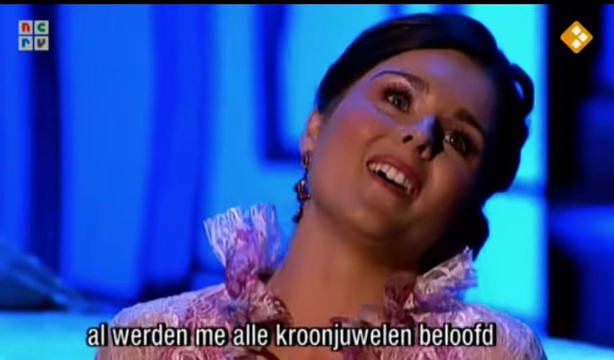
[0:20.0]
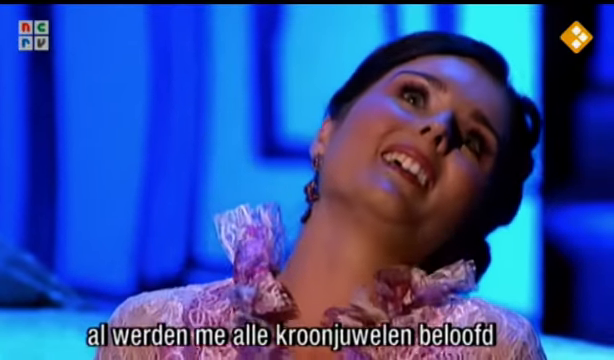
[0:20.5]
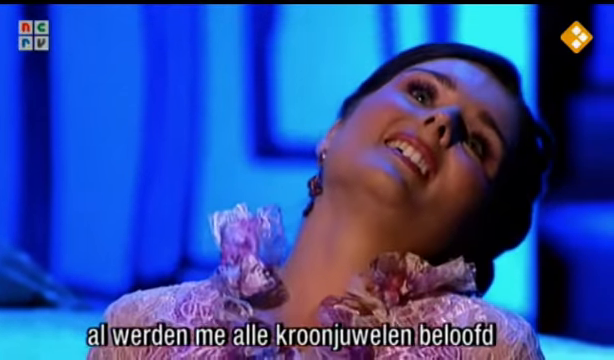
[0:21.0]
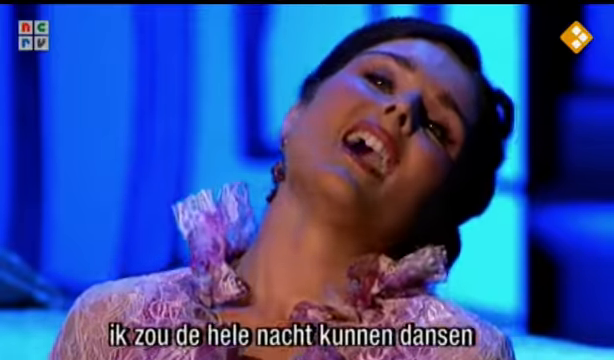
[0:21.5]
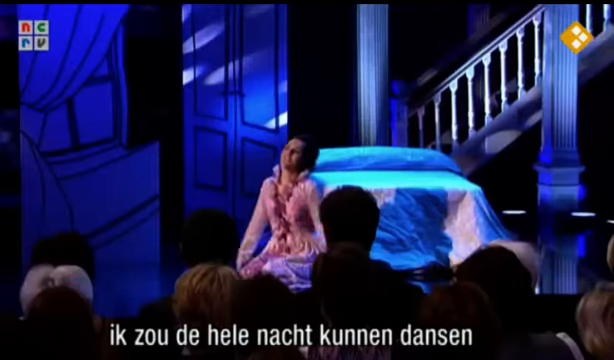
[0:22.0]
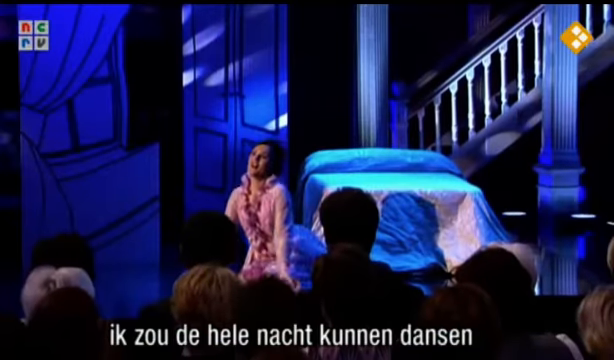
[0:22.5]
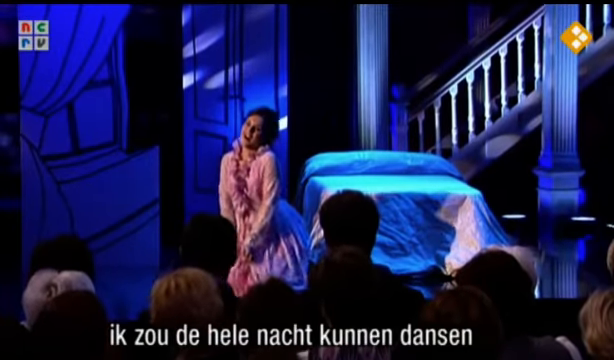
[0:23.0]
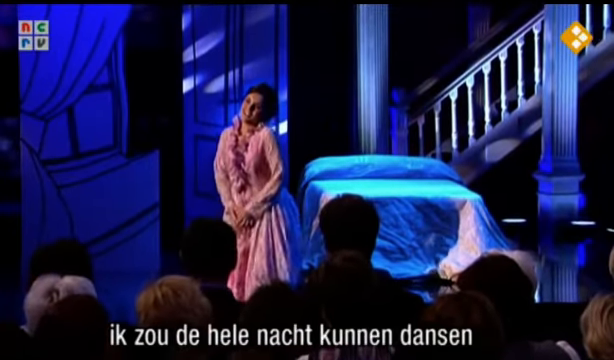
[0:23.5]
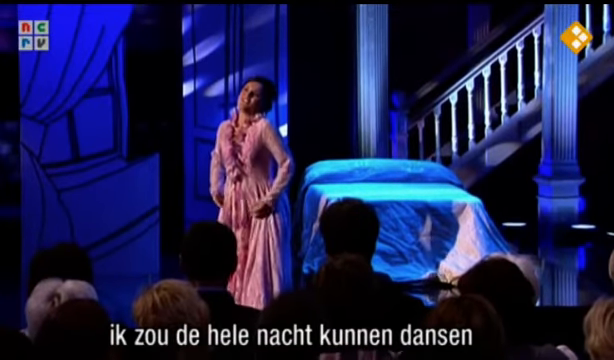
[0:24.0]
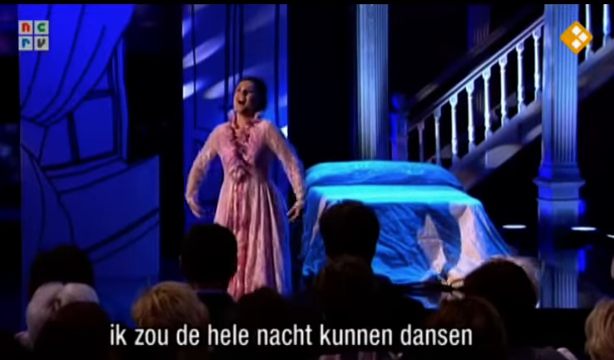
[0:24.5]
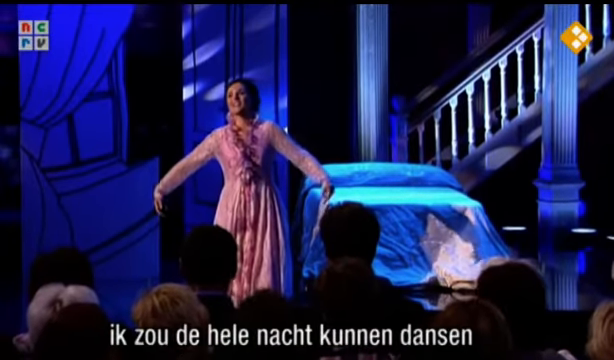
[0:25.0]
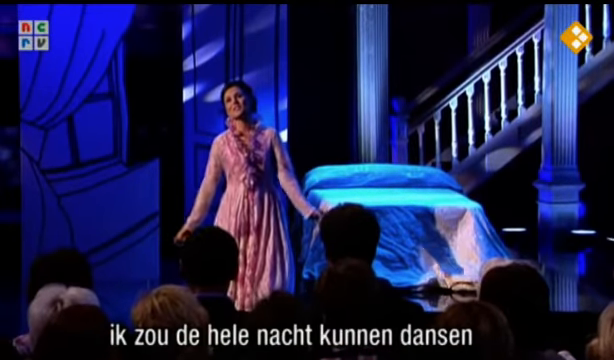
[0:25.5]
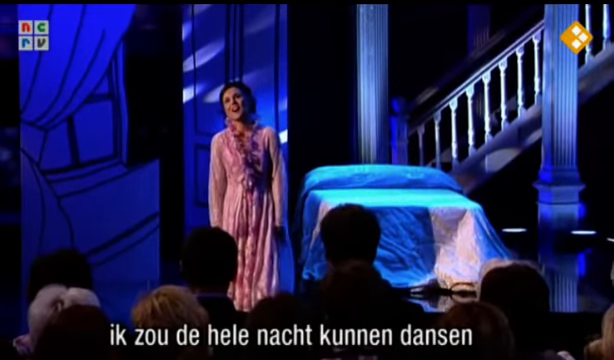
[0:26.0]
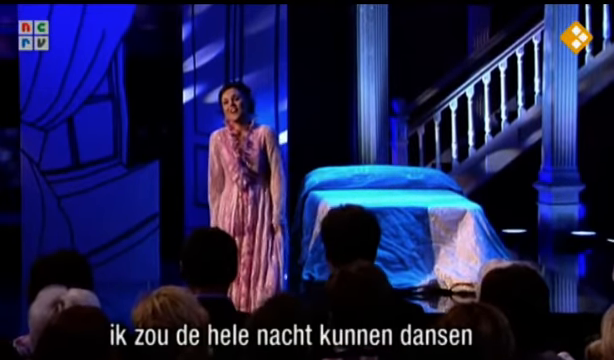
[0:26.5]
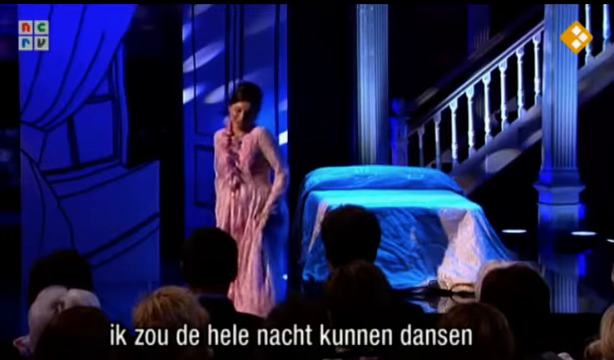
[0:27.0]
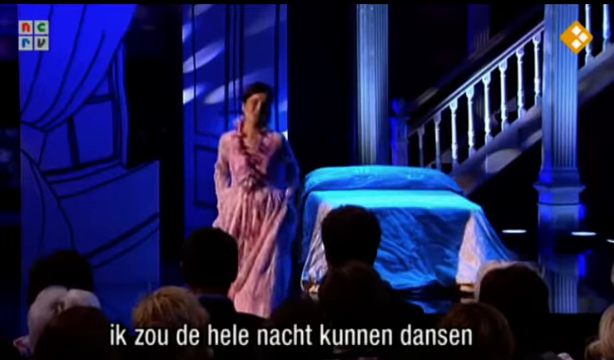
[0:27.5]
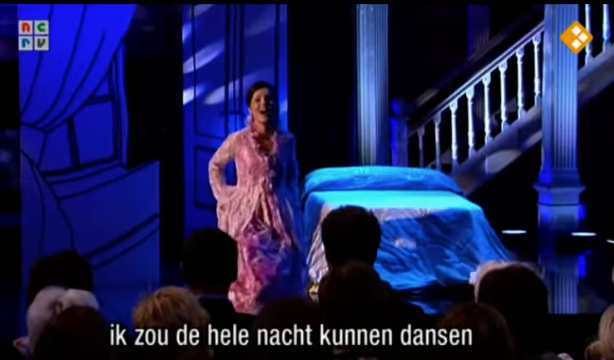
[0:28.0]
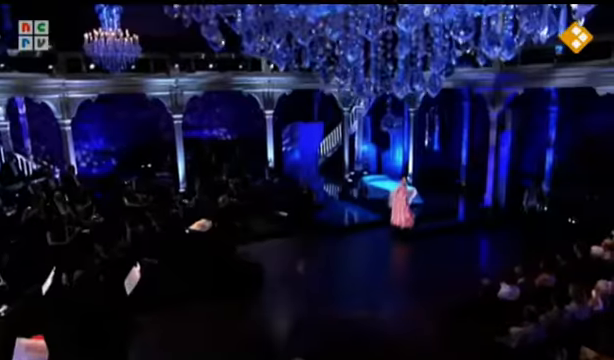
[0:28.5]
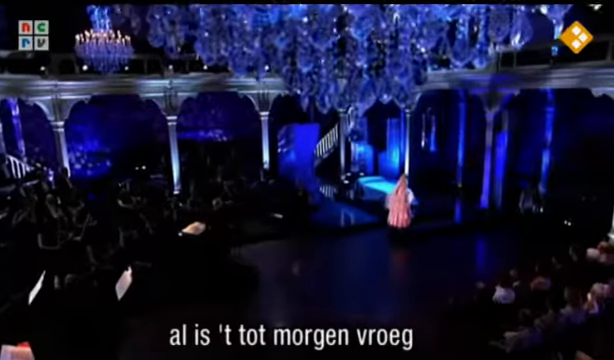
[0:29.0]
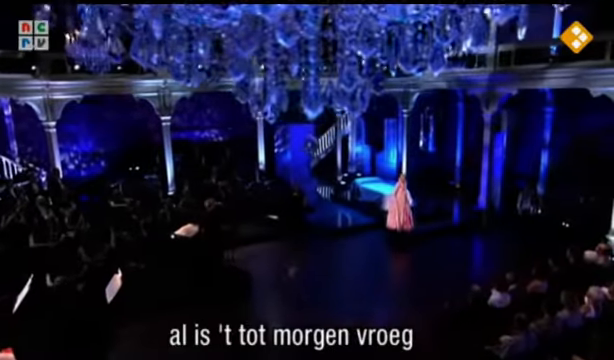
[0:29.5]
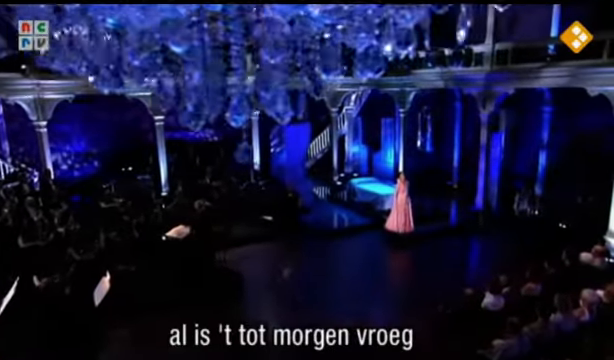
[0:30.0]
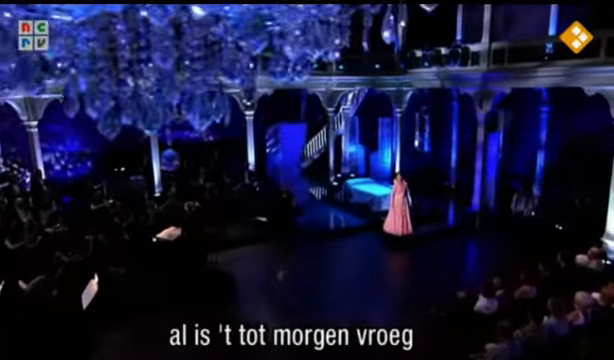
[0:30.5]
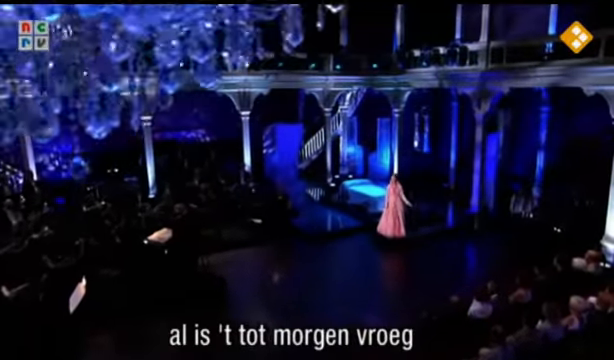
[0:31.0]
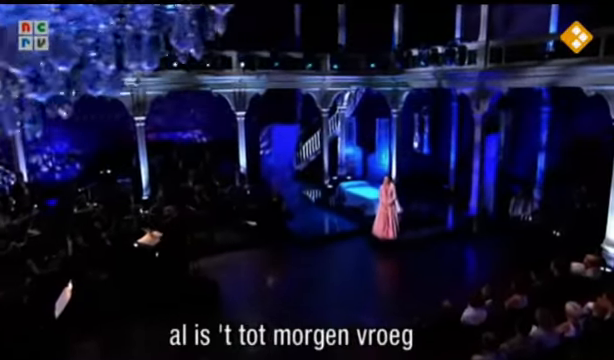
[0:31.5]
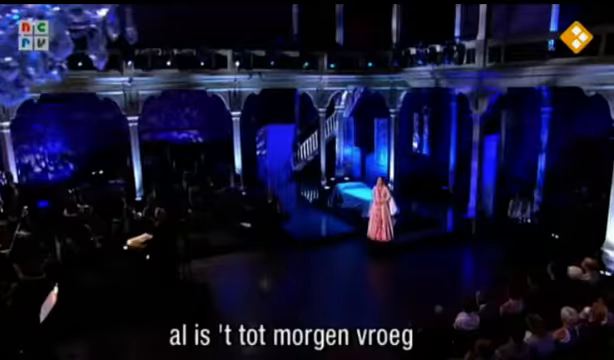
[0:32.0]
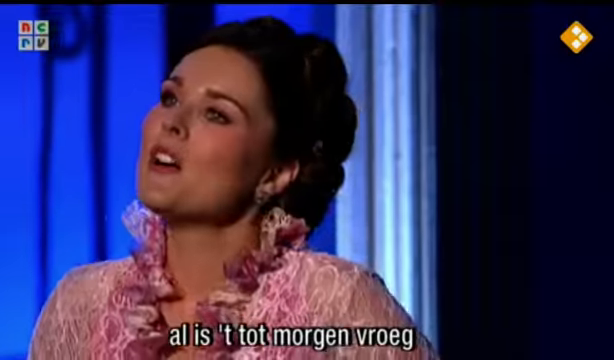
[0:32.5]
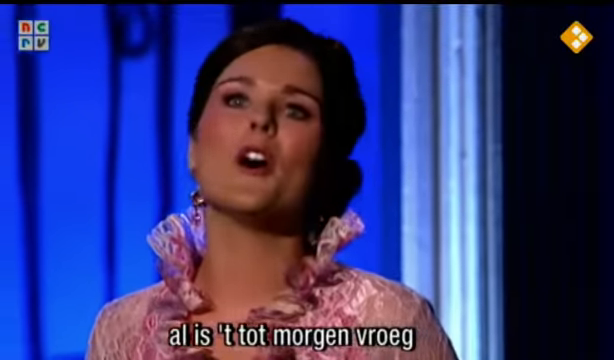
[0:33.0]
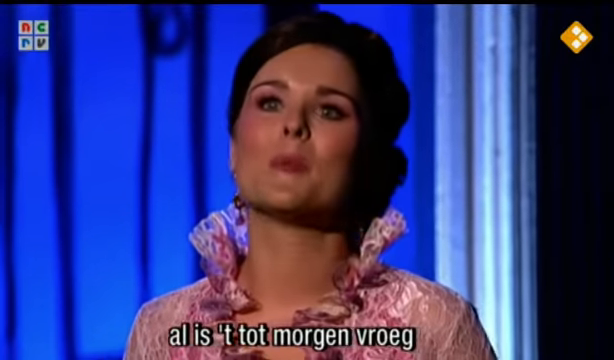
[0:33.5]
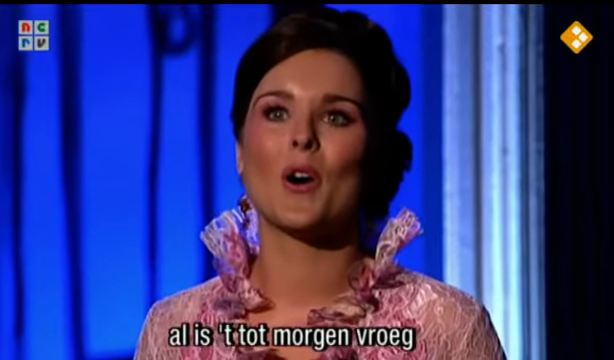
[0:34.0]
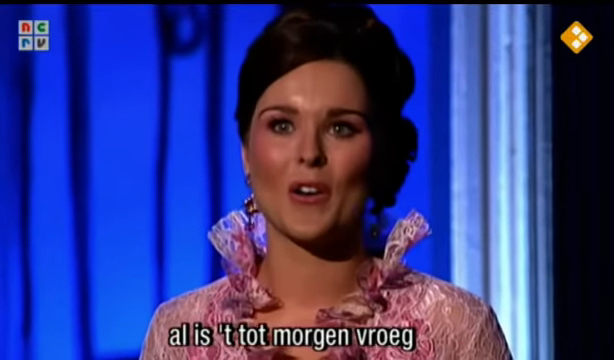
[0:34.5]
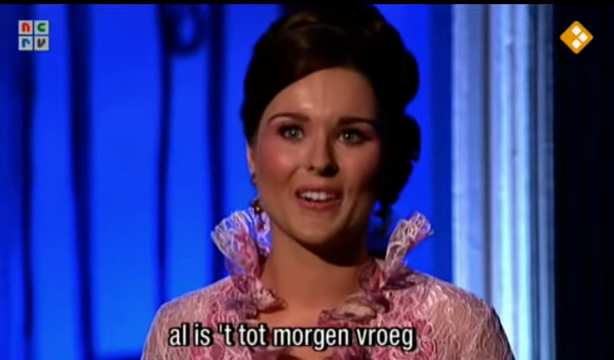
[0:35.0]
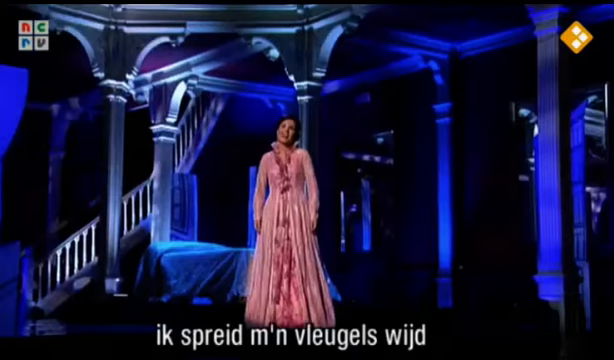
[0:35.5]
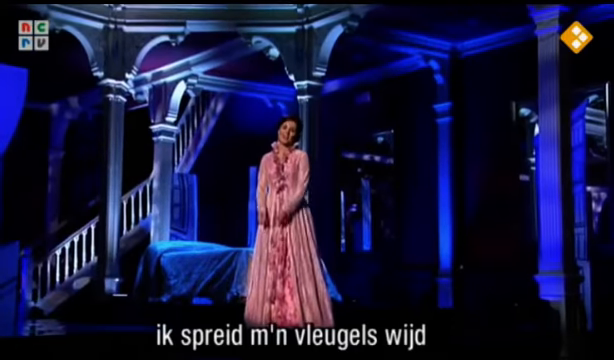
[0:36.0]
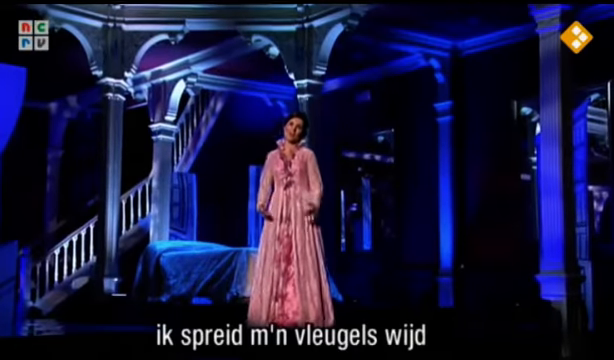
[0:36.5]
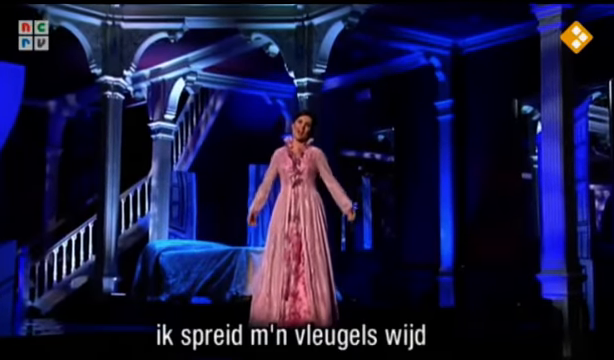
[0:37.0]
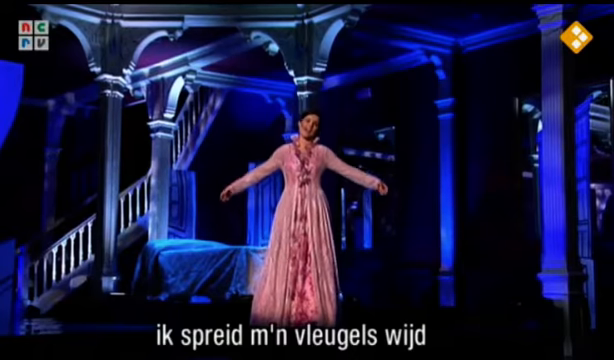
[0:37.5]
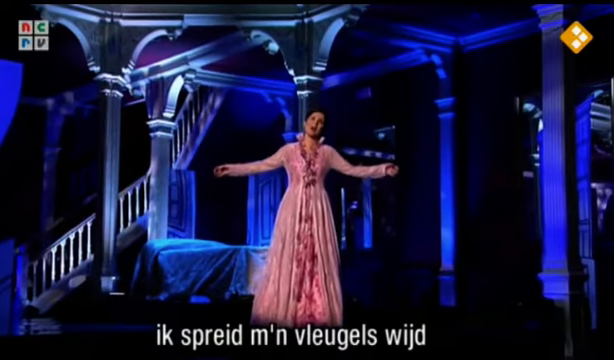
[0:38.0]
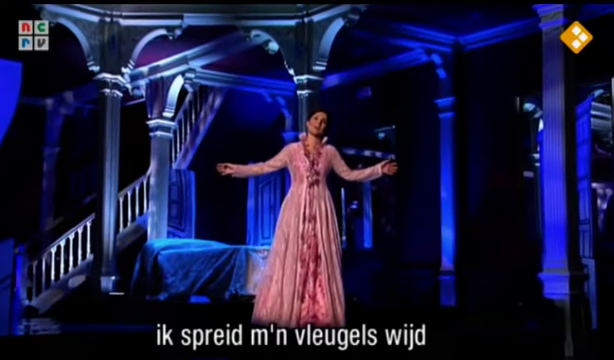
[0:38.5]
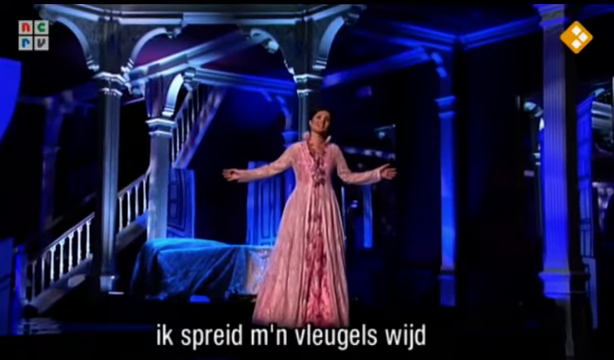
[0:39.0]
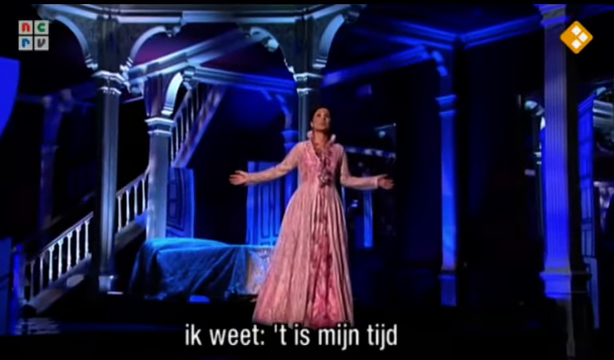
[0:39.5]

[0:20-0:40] The woman in the pink dress leans backwards somewhat as she sings. She slowly stands up, places her hands on her waist, and then gracefully waves them near her sides. She picks up the bottom of her dress around the hips and takes a few steps onto a larger stage area. She keeps singing passionately as her blue eyes gaze into the crowd. The camera switches between a close-up of her face and a more distant angle that shows more of the set, which looks staged as a bedroom with a bed and a long staircase. While singing, she raises her arms so they extend roughly straight to the left and right near her waist. Her movements are elegant and feminine.